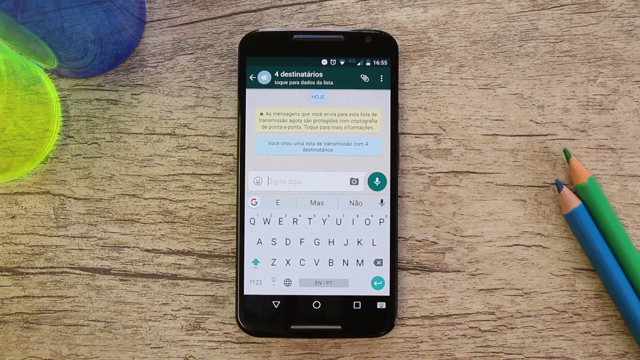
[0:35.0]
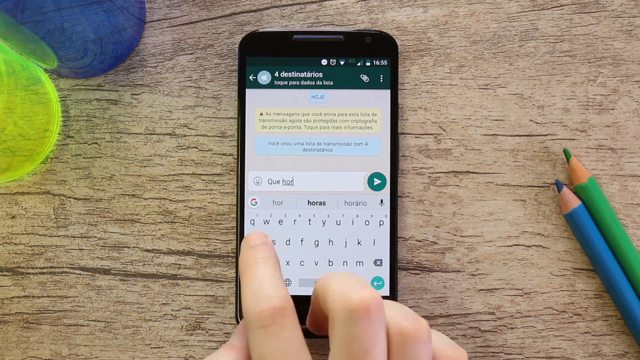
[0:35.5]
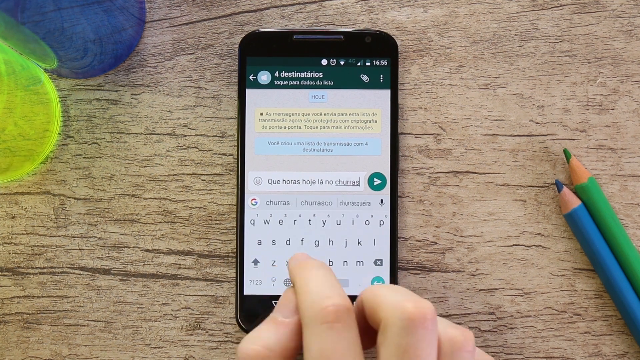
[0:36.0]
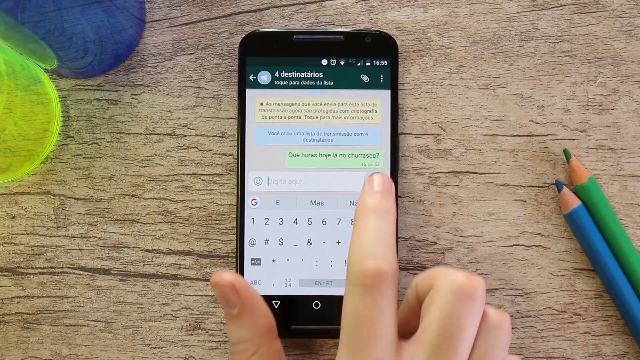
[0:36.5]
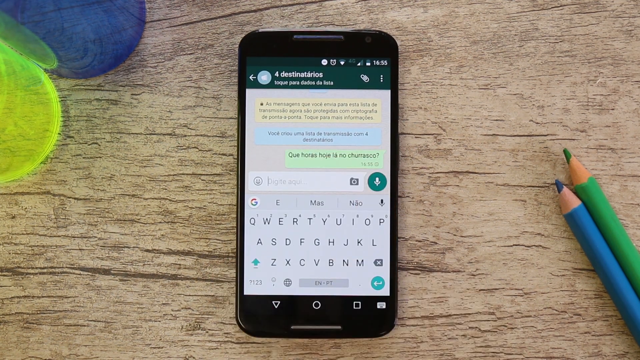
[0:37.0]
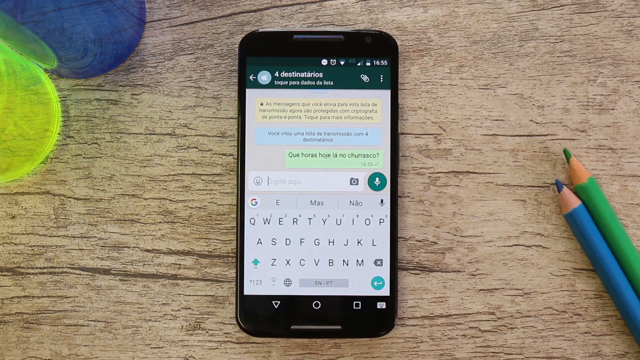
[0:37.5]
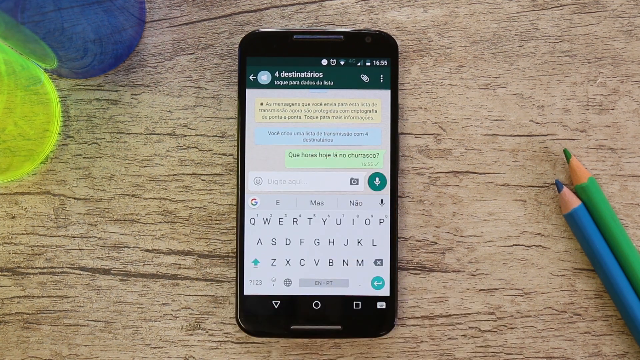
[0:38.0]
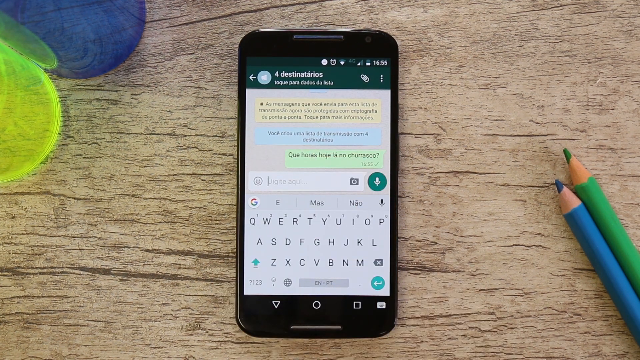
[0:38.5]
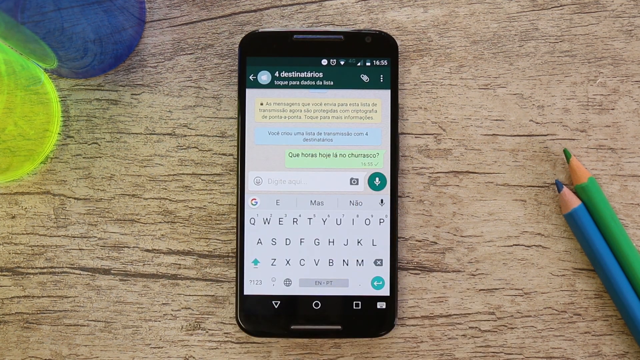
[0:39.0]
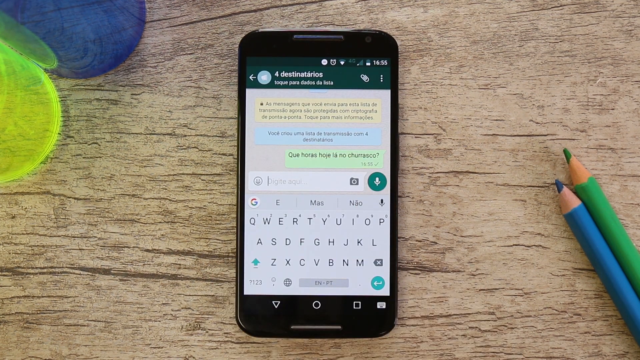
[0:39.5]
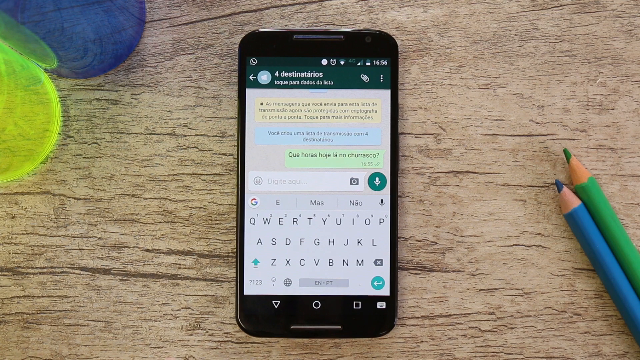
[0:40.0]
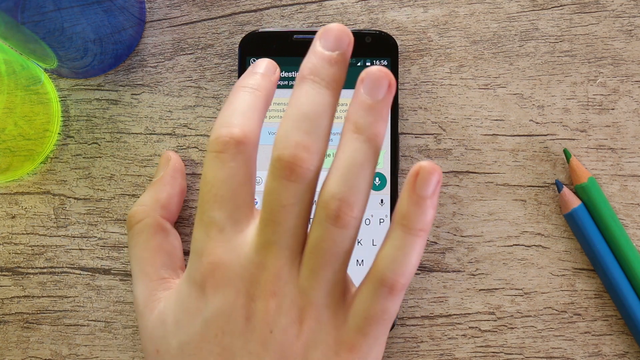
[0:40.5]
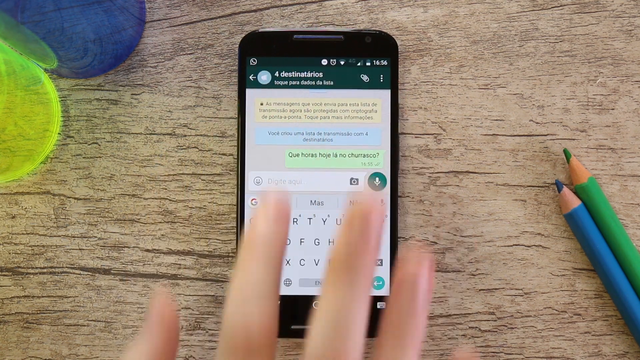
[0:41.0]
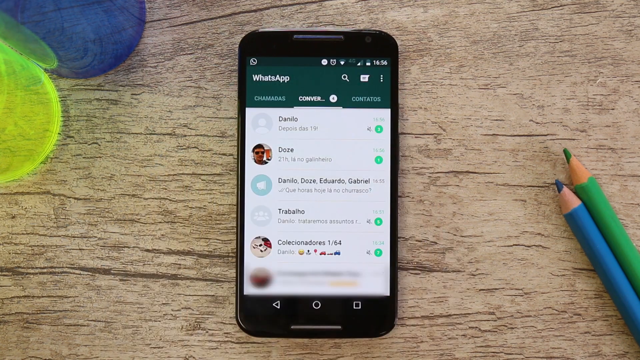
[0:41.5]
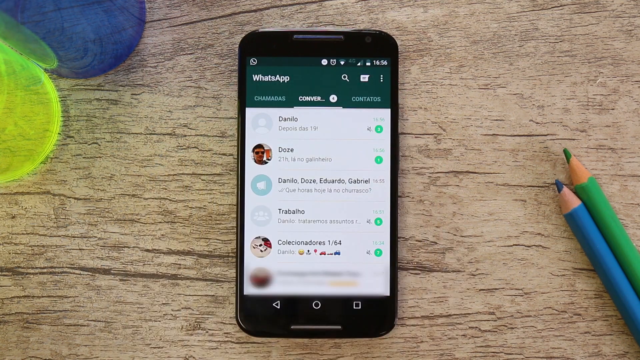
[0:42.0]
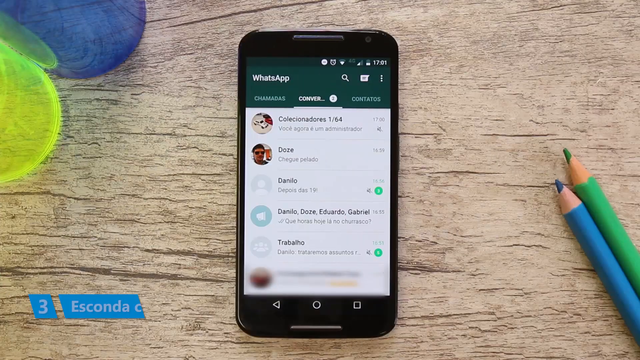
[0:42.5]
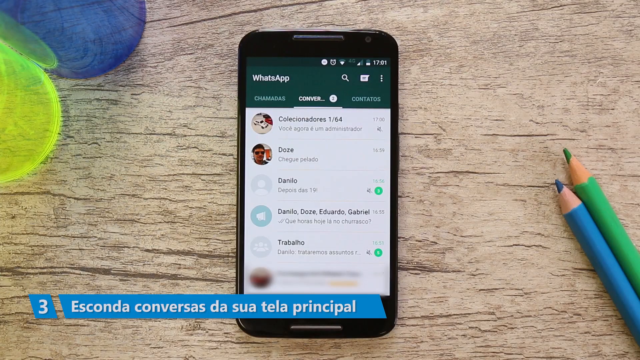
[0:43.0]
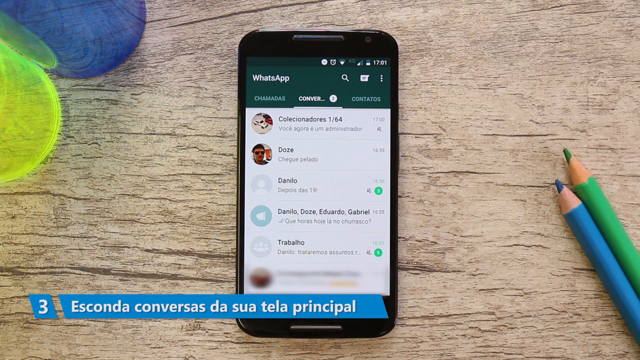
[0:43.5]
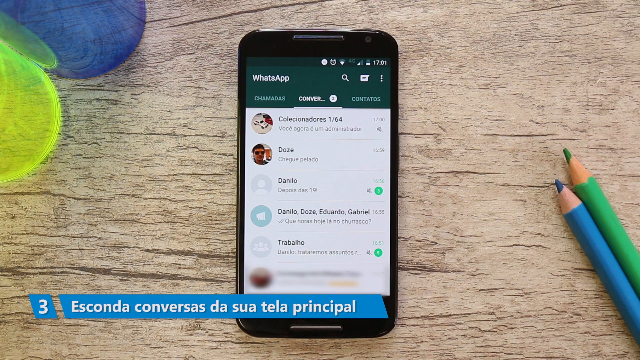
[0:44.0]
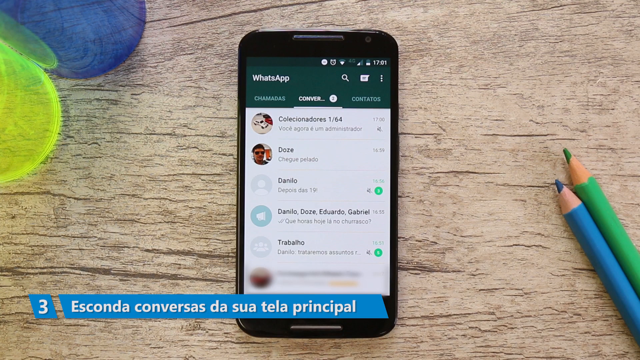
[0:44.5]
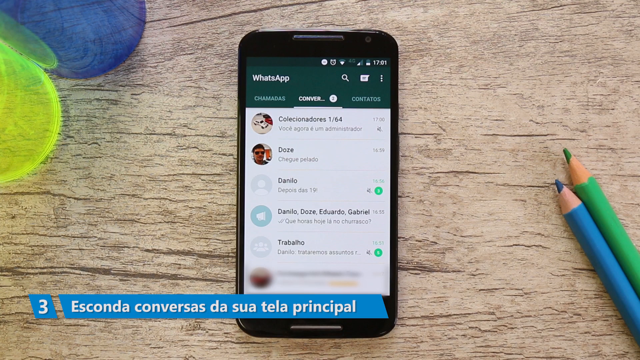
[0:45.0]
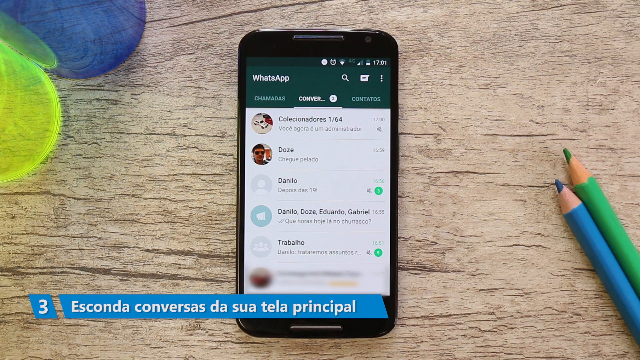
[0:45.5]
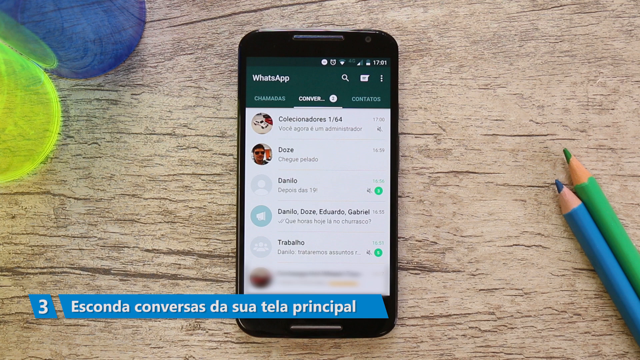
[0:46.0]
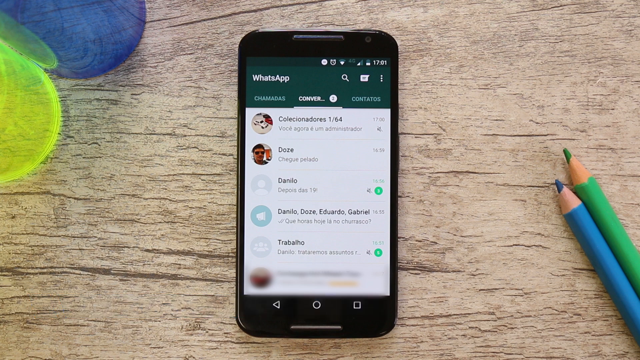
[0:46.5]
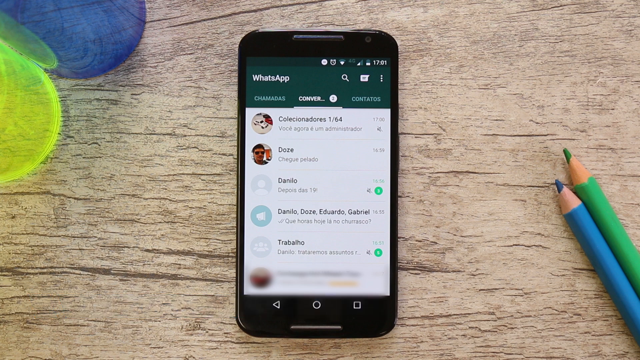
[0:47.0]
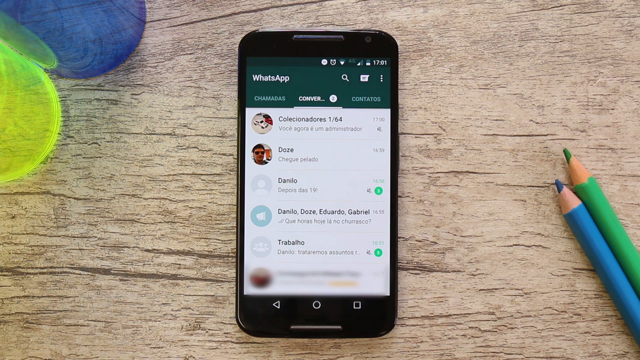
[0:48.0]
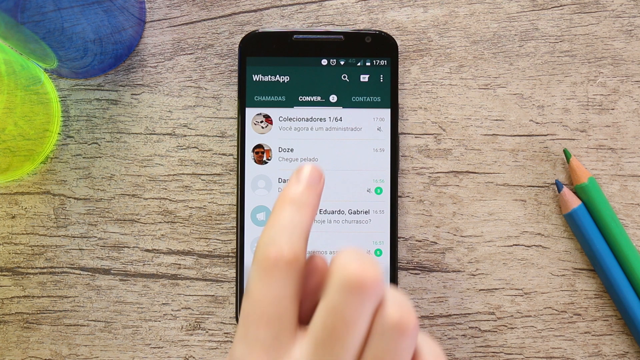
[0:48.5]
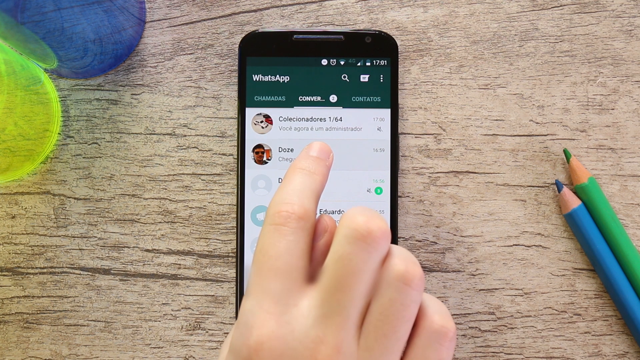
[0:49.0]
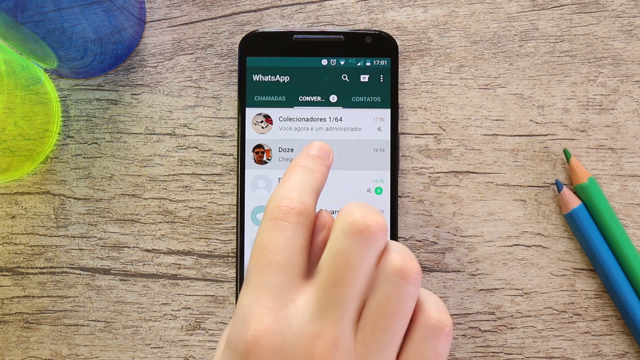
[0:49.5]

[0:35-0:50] The person types into the search box or message field, typing "que horas oje" and more. The number three appears in the blue bar at the bottom. The person taps on "DOZE" and asks them a question in the app. The top of the app apparently shows "destinarios", and the blue box at the bottom left reads "esconda conversas da sua". The typed message shows up with a green box behind it. There appear to be two highlighted green circles on the screen, and the person's text box looks like it has a blue background.